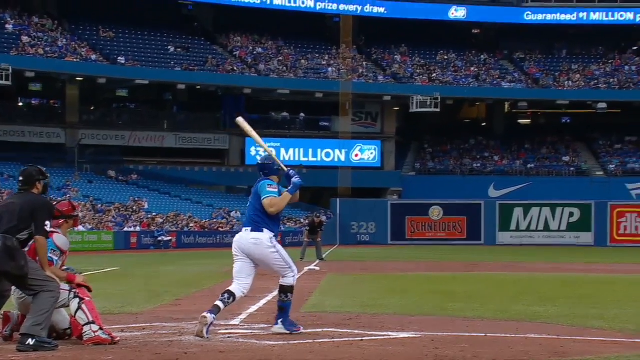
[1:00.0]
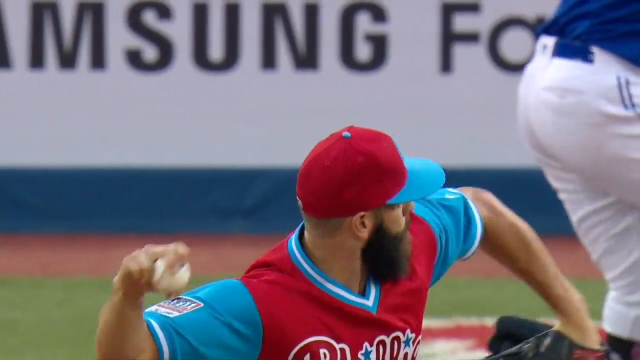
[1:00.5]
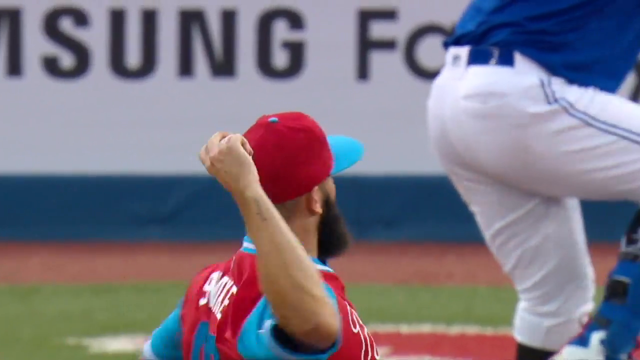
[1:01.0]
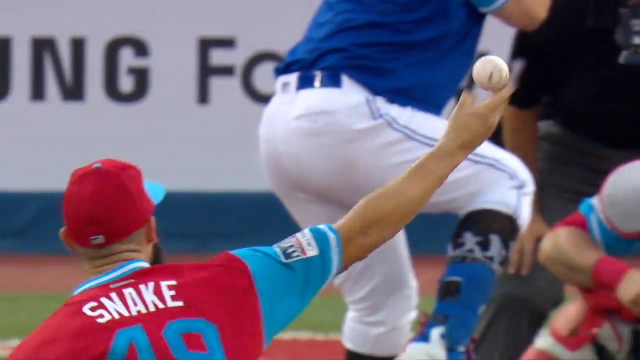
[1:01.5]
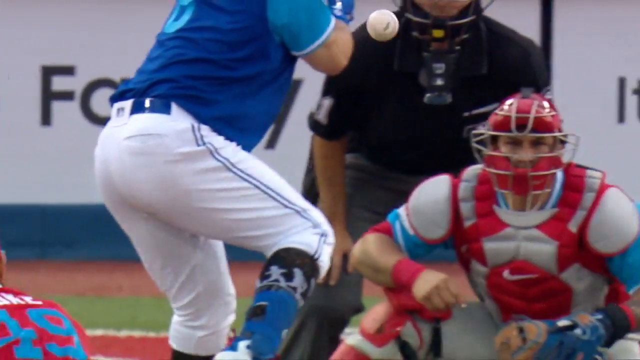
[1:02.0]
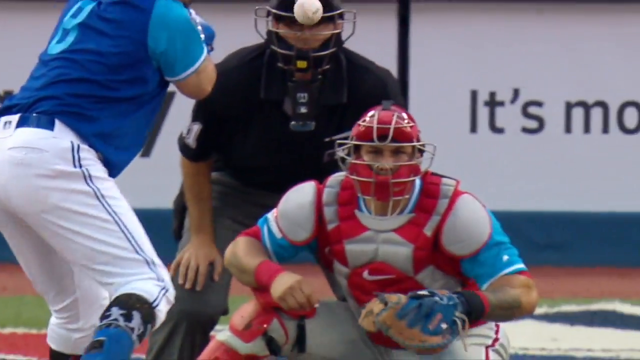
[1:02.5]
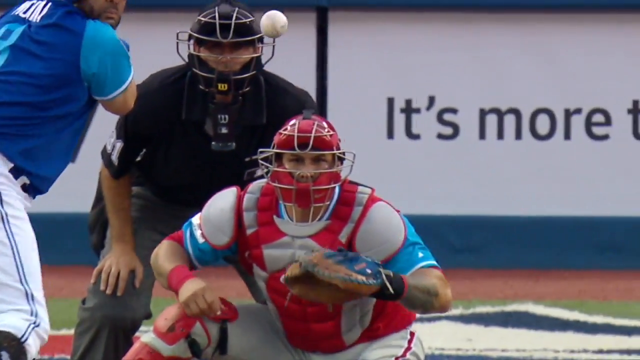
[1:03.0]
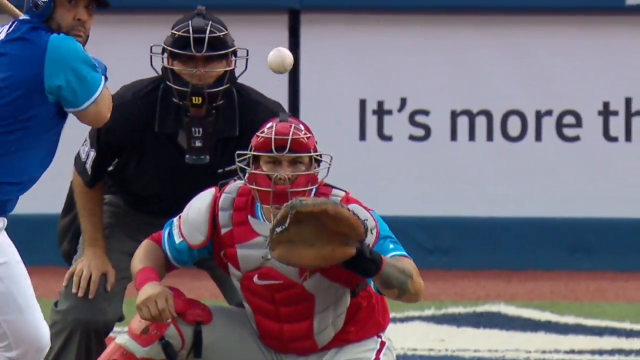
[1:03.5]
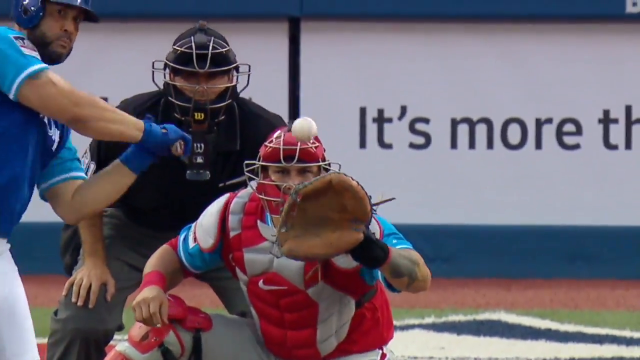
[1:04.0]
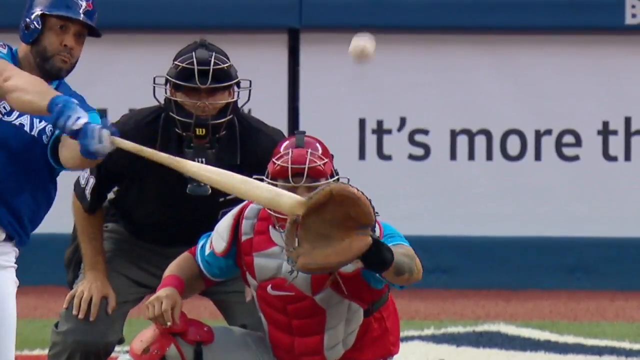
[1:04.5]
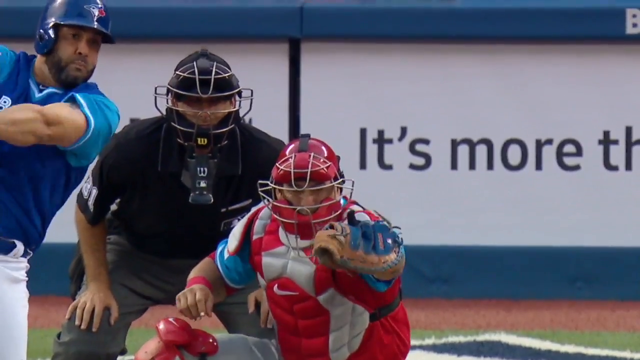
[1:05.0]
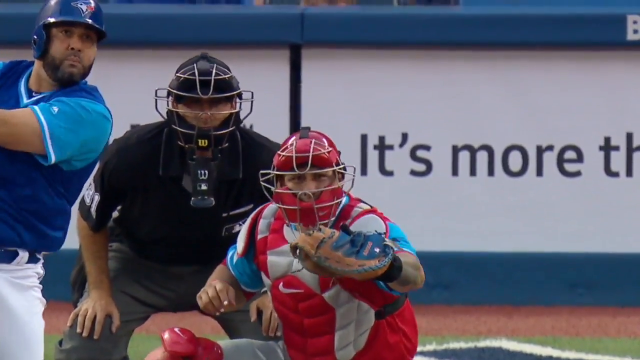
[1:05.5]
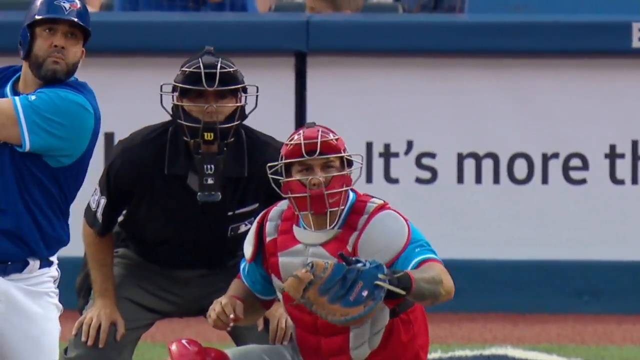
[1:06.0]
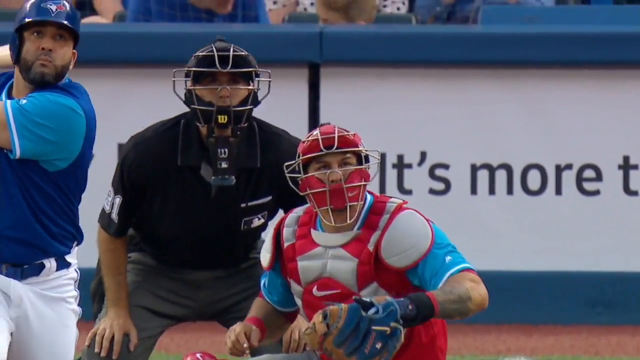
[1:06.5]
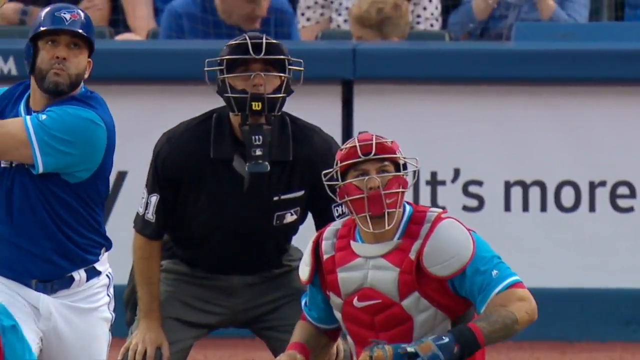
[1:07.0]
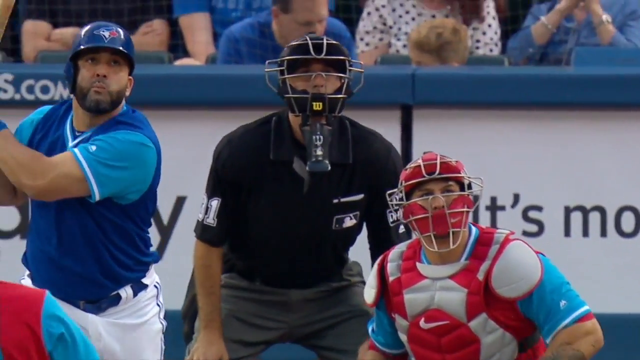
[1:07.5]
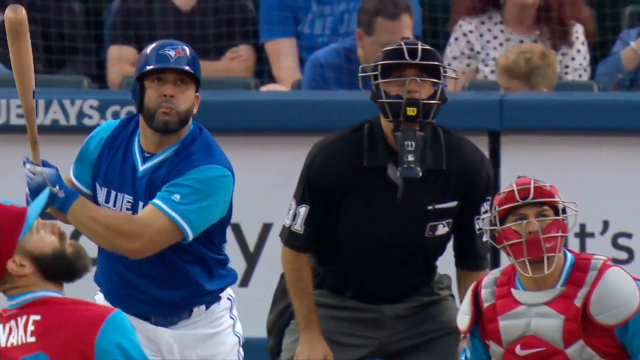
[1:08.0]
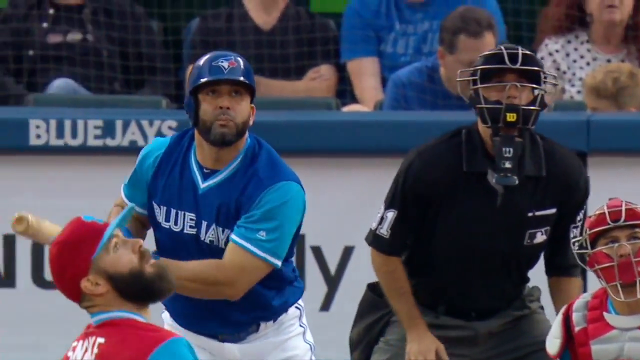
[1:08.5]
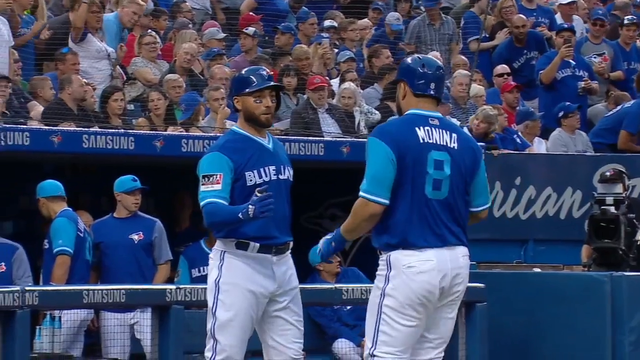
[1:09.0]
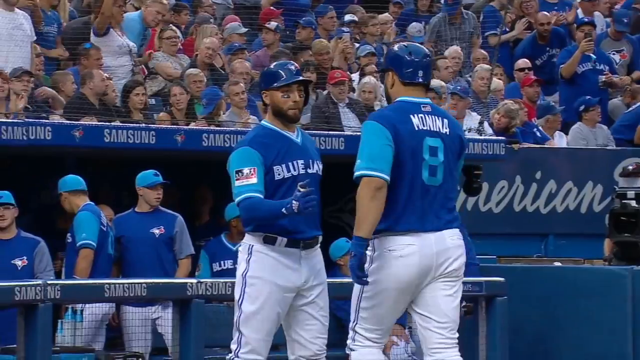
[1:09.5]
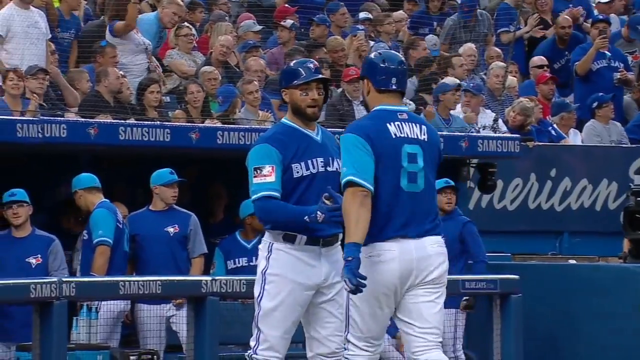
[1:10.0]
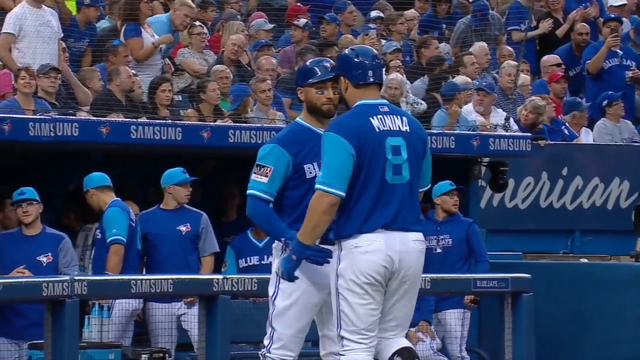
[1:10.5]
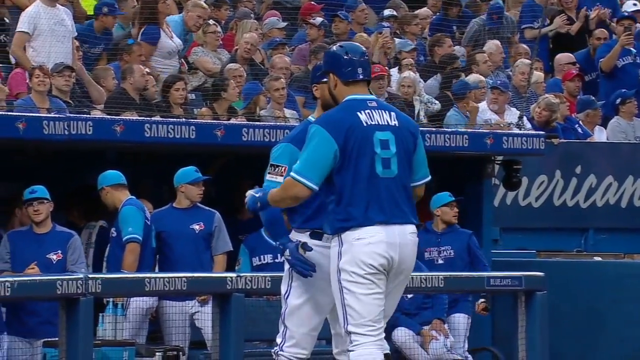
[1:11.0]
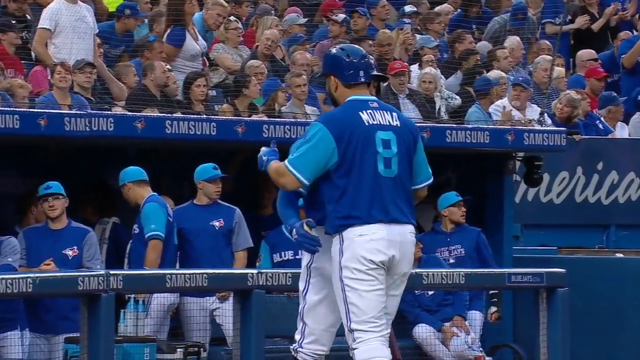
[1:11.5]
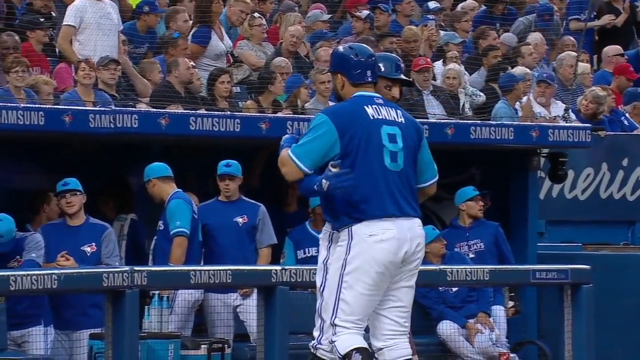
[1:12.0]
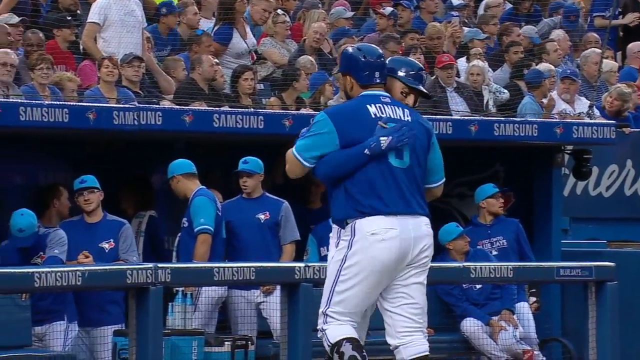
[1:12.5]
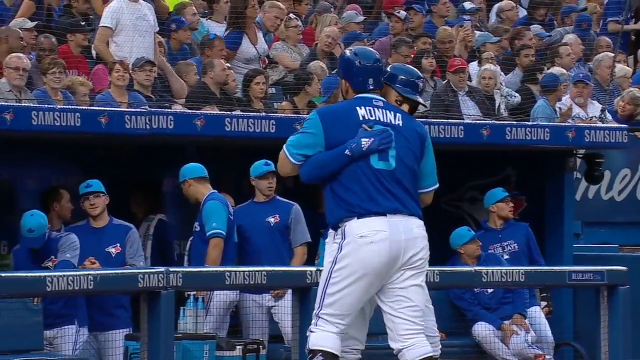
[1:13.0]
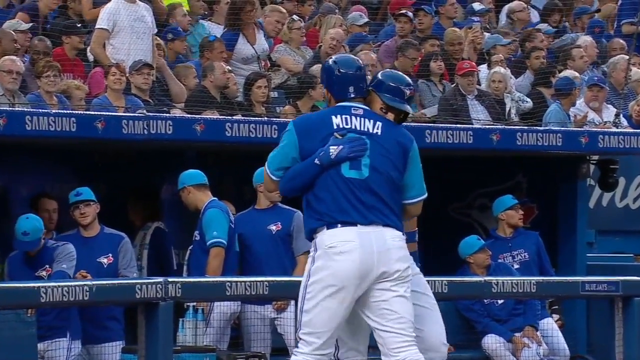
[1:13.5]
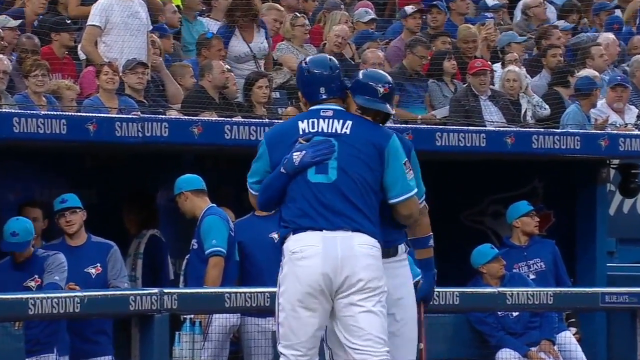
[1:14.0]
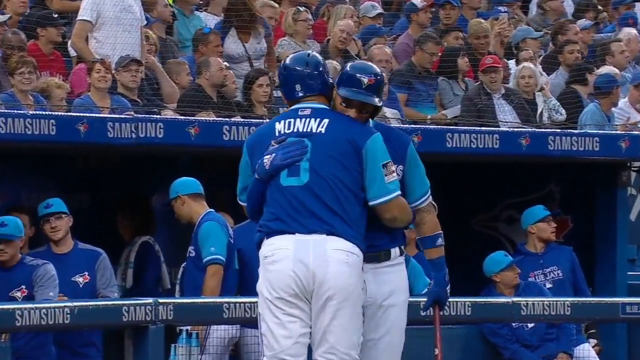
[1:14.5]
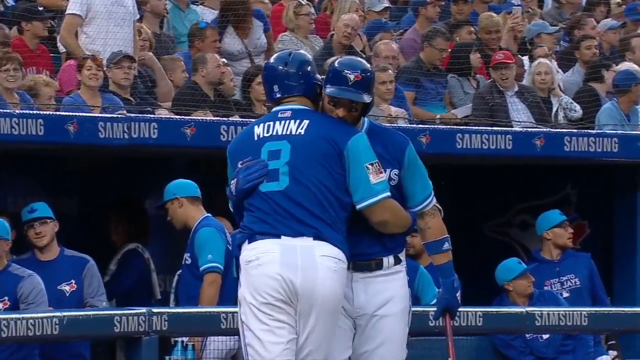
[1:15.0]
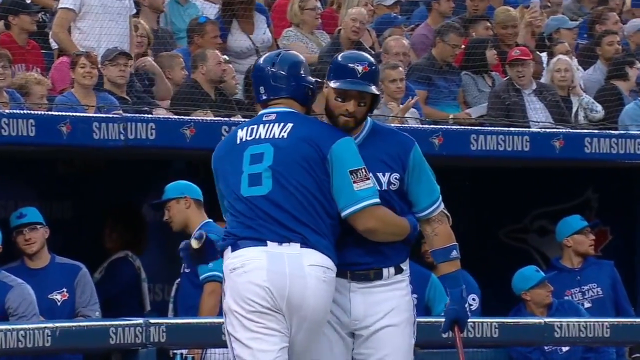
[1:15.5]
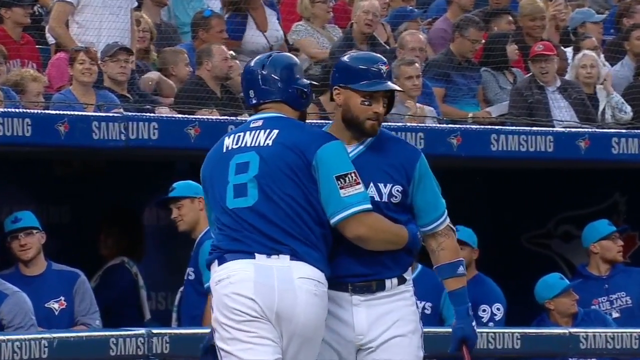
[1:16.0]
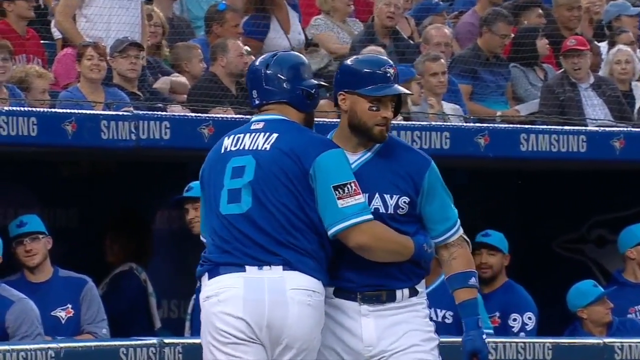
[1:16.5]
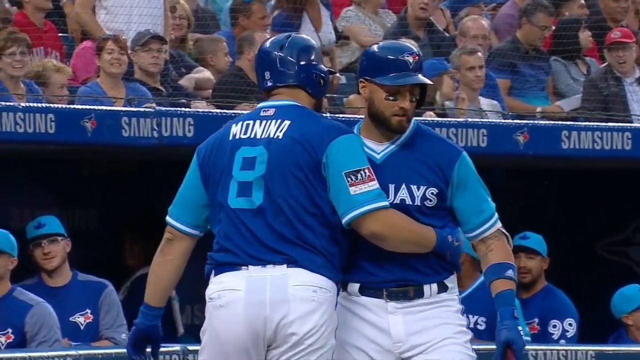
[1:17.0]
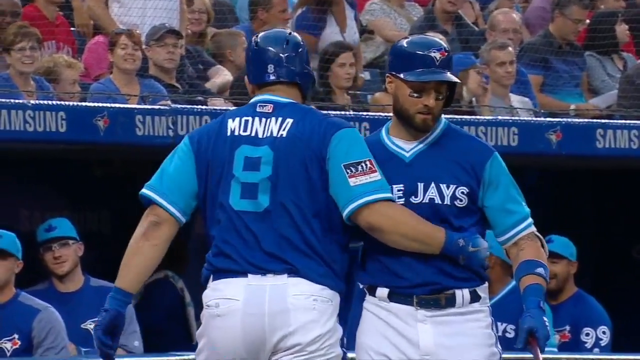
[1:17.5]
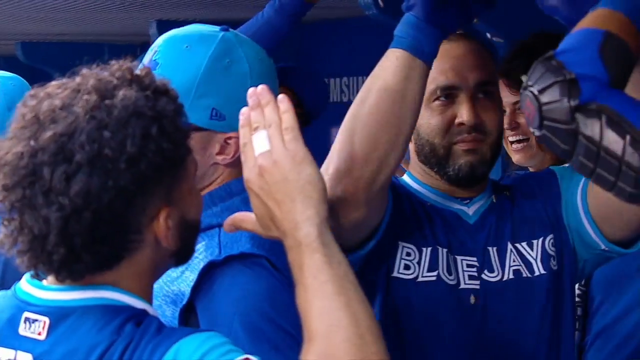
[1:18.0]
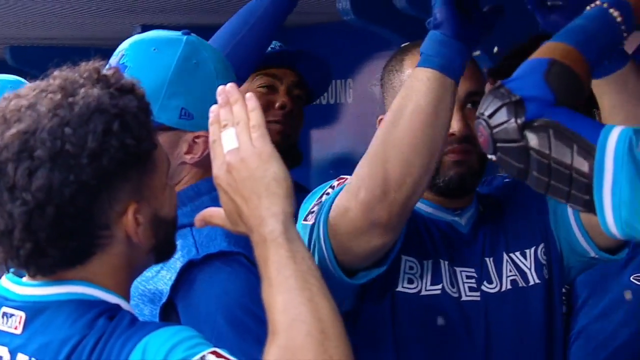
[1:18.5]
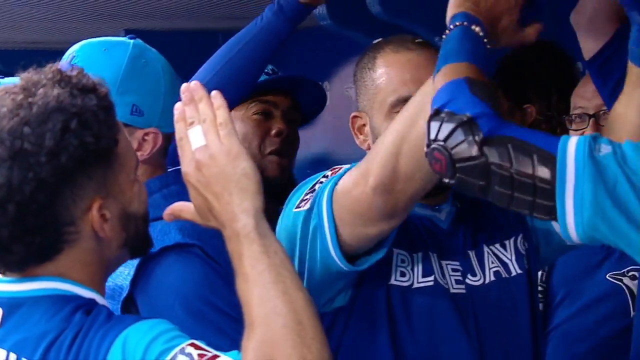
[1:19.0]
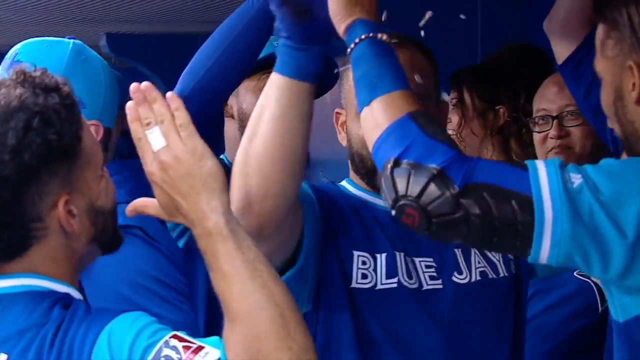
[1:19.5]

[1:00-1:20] The home run is replayed in slow motion. The pitcher throws the ball, and it moves slowly toward home plate; the batter hits it and watches it fly up into the sky. The catcher's mitt misses the ball because it is hit before reaching him. Still in slow motion, a man hugs one of his teammates, the one who hit the home run, and number eight hugs another Blue Jay. As he reaches the dugout, he gets lots of high fives over his head and cheering.